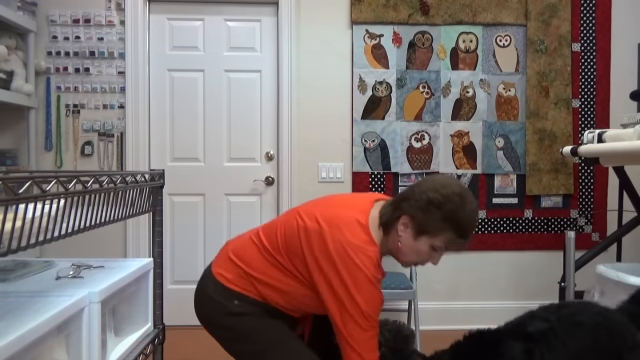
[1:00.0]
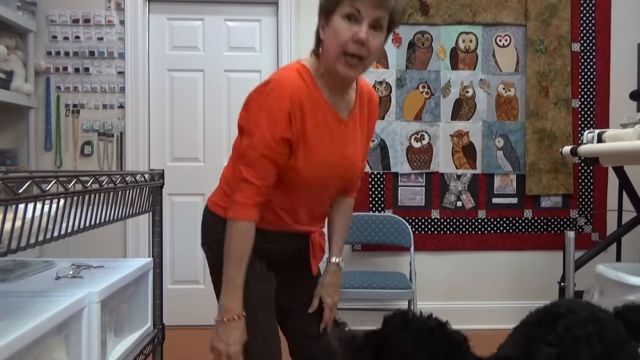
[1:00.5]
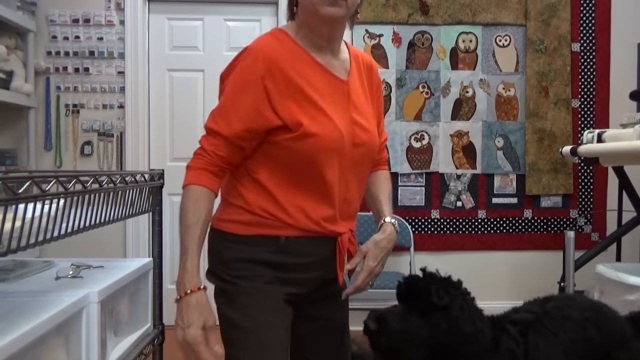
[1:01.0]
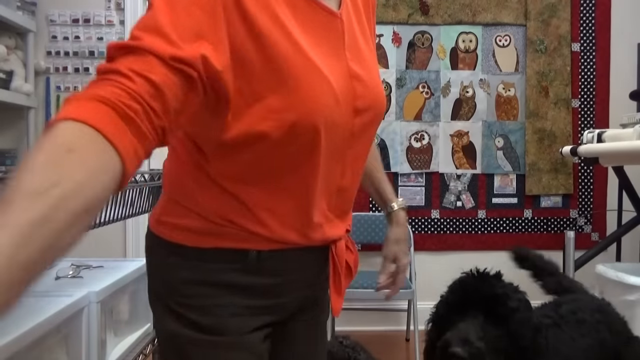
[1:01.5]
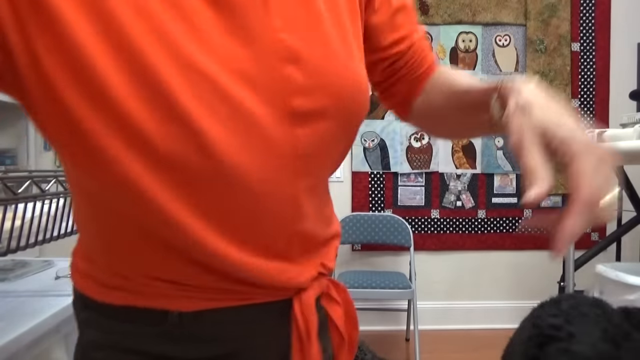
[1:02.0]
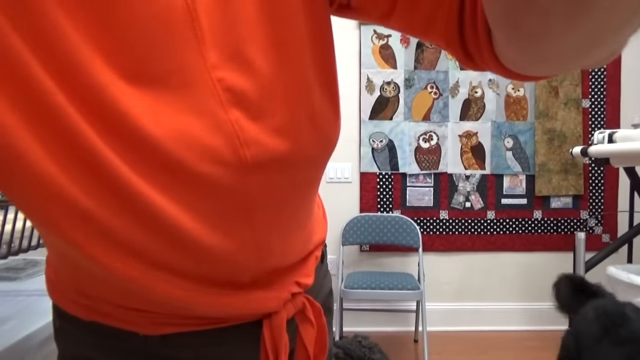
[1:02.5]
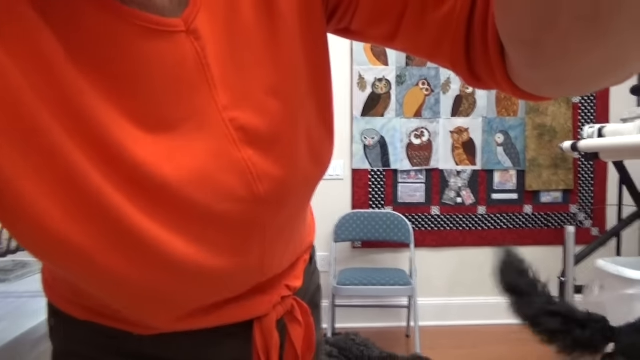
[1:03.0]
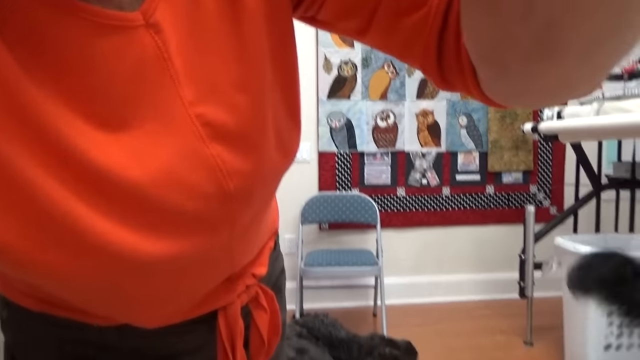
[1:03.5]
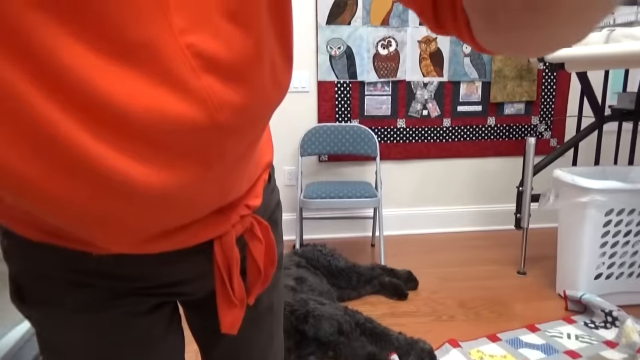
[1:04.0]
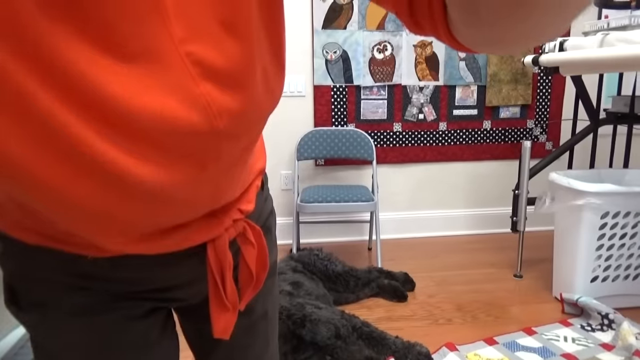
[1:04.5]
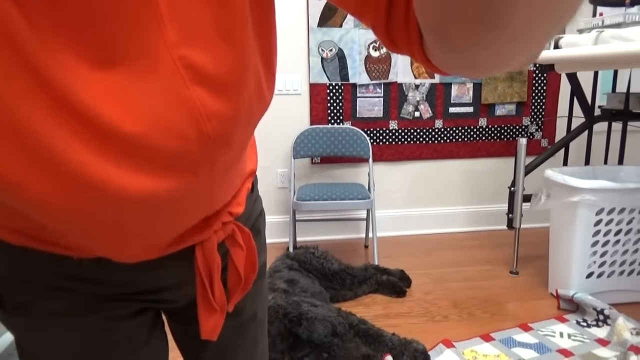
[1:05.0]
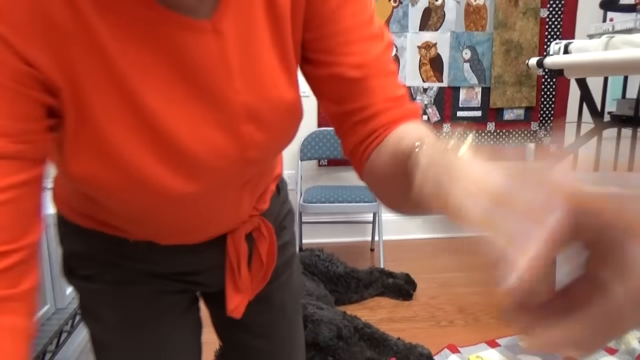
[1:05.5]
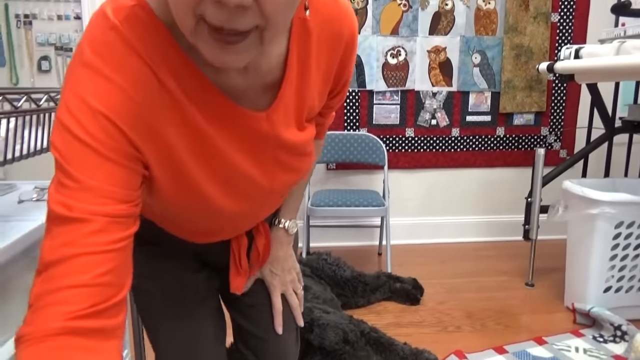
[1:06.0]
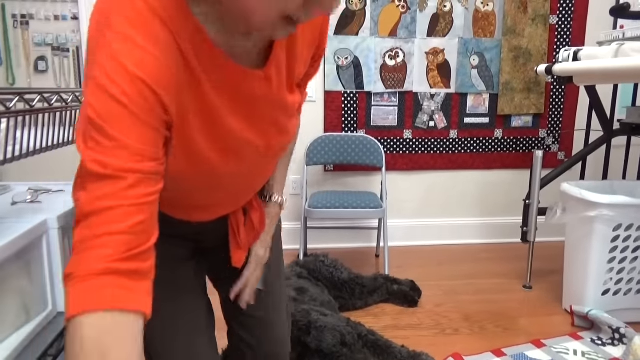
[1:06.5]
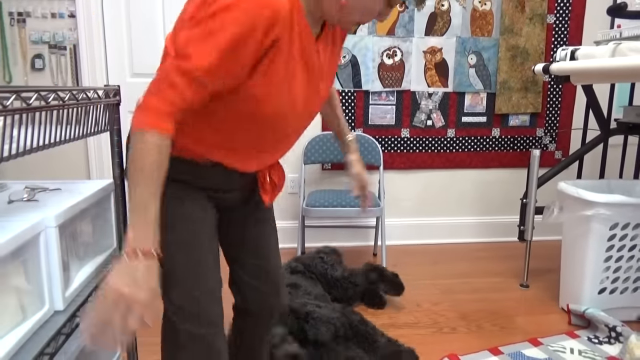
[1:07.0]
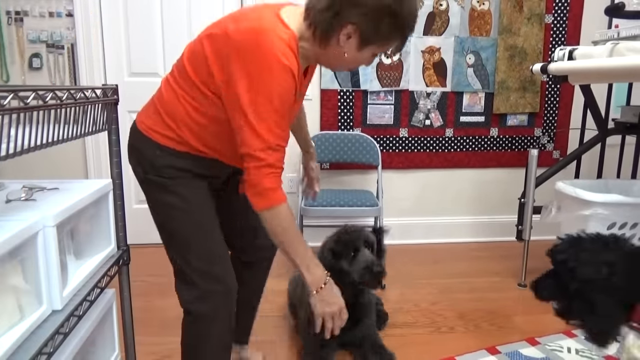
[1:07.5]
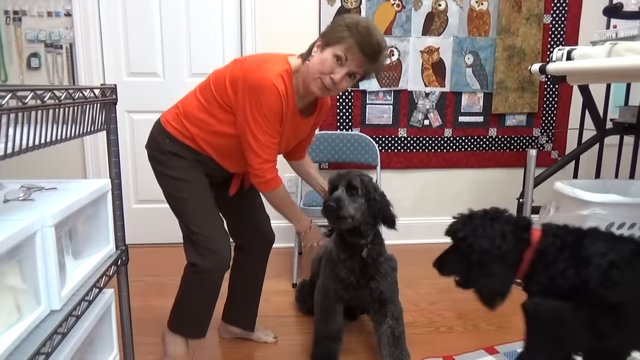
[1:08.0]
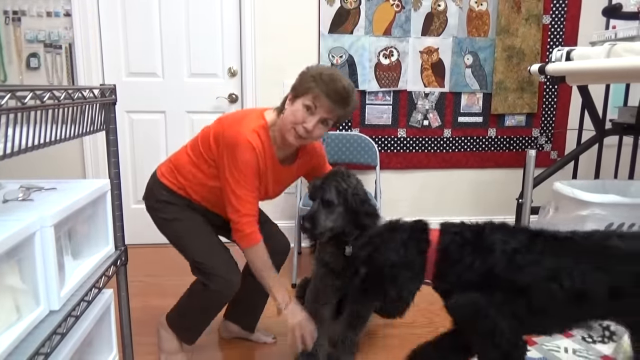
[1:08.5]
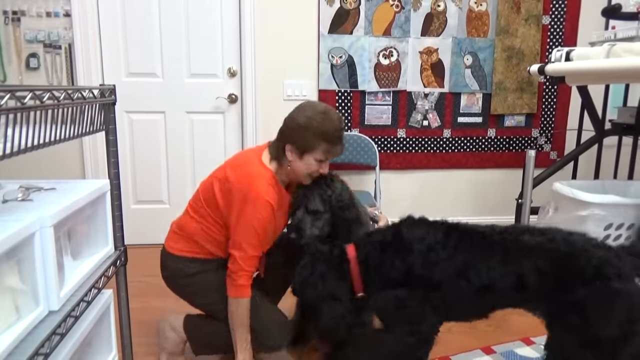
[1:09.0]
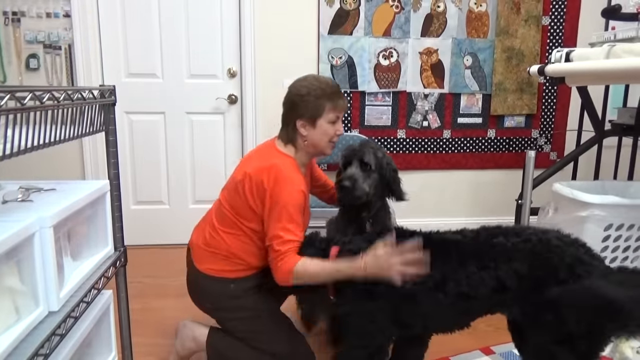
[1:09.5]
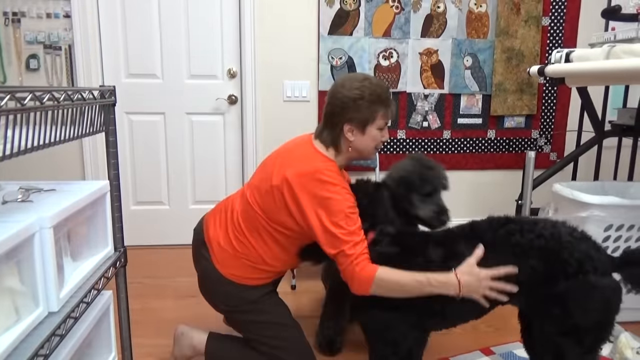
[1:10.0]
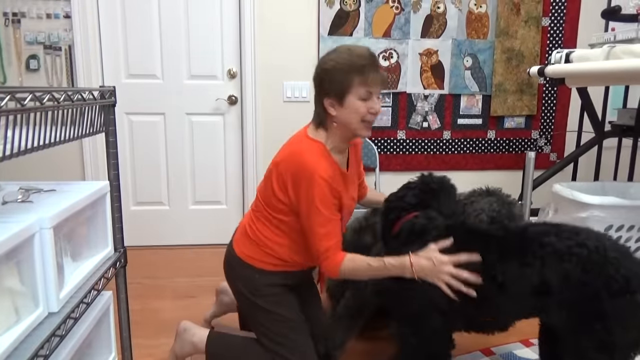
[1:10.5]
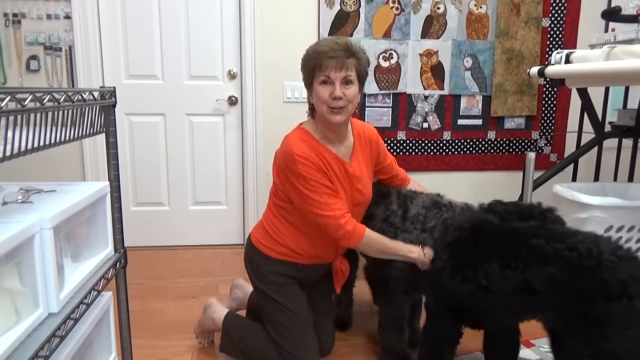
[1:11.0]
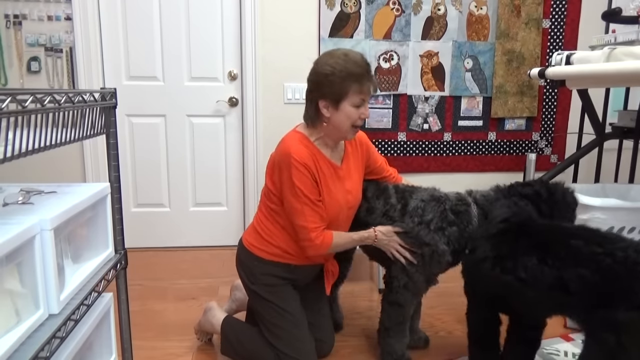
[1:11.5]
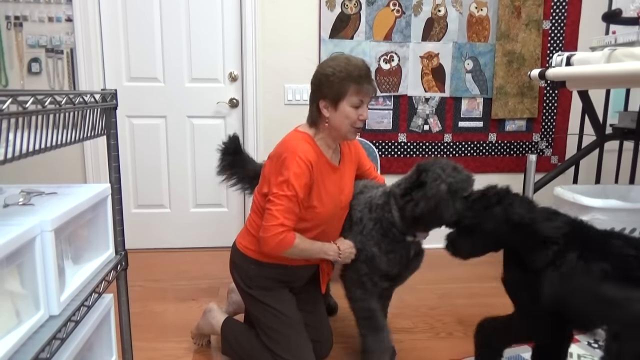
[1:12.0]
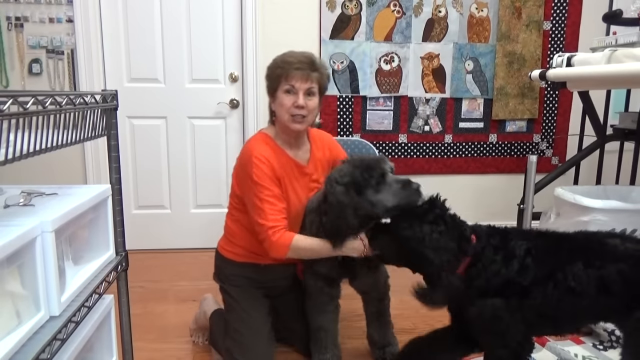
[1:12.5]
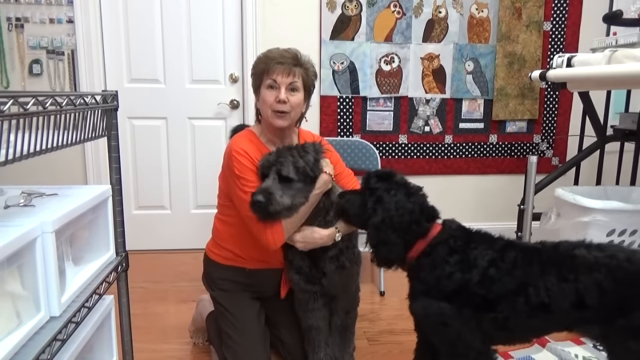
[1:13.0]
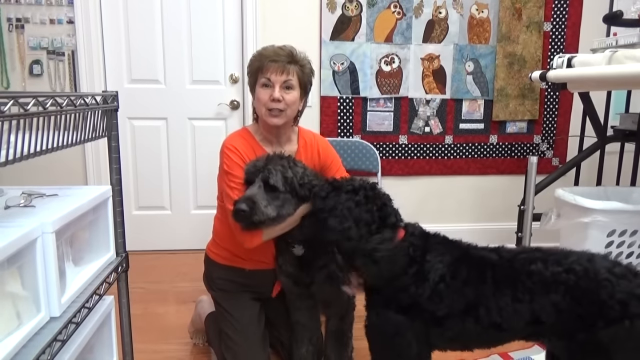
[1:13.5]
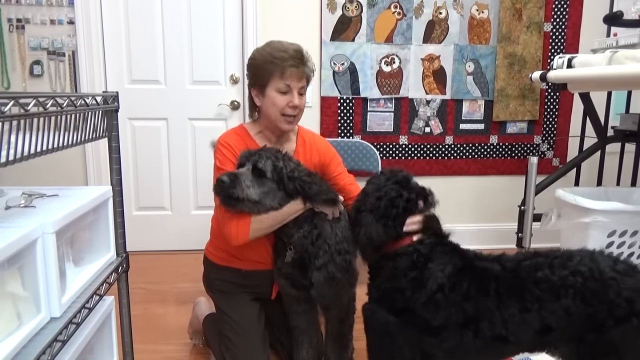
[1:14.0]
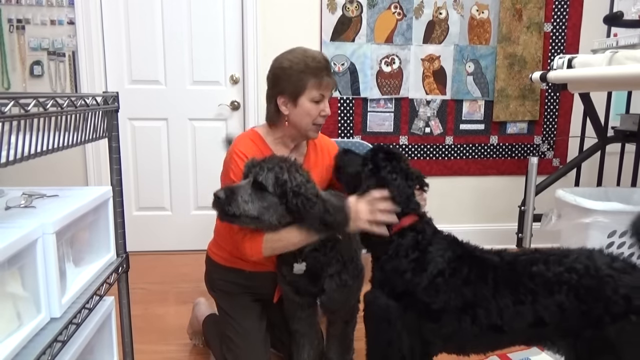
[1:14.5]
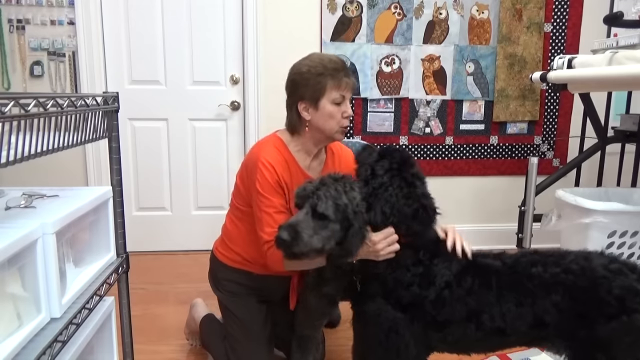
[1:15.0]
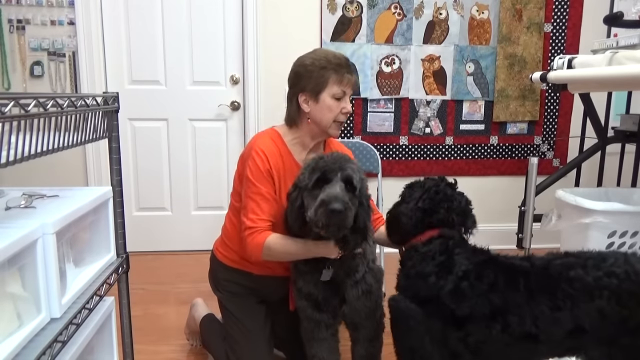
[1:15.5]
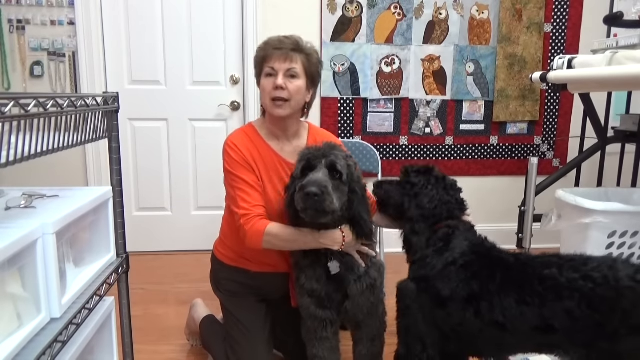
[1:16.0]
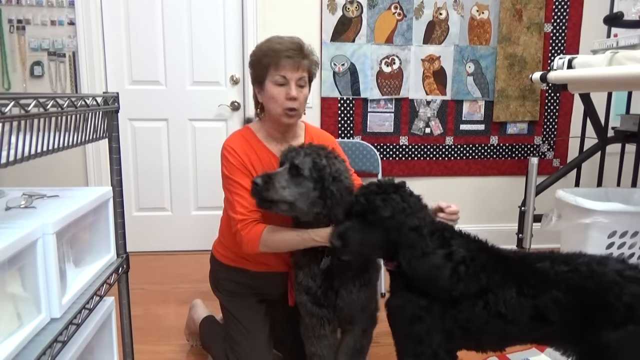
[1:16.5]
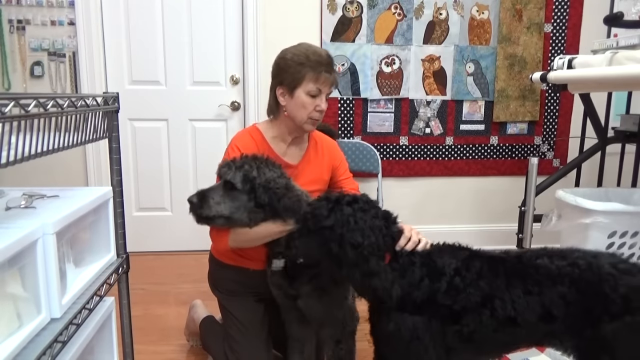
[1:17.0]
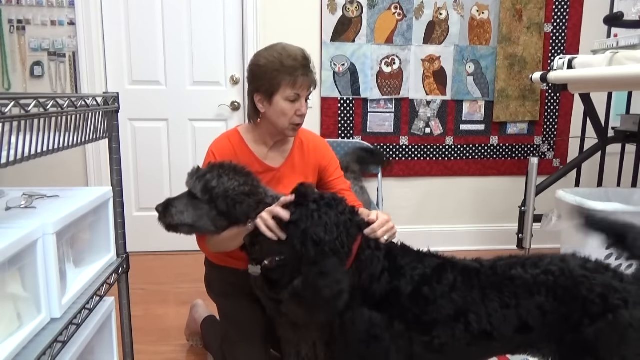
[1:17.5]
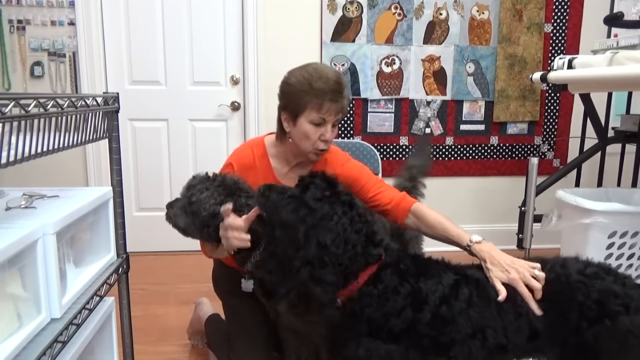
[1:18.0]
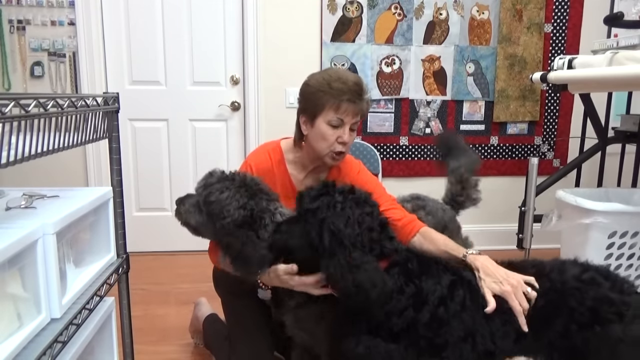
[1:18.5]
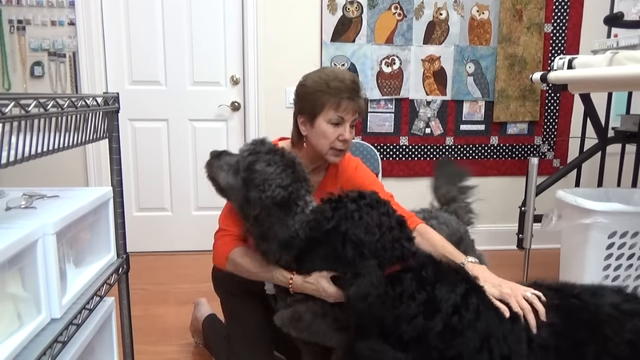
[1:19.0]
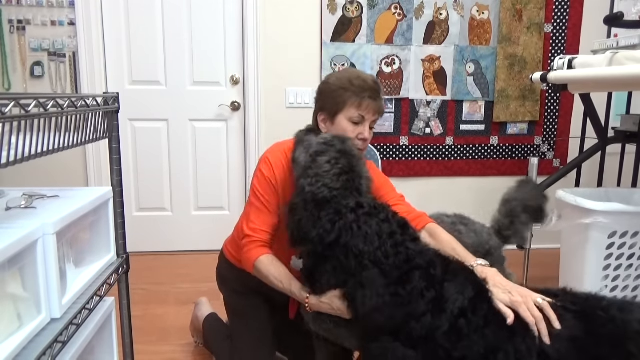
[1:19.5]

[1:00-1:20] Once she is done fixing the camera, the woman goes back down on her knees on the ground and tries to pet and touch both dogs at the same time, but a dog looks like it starts standing up and she can't finish because they are too big. The dogs lick her and look very relaxed and nice. The woman seems very interested in the lighter dog, holding him tight and mostly hugging him. Still on her knees, she keeps petting, rubbing and playing with the dogs, giving them a lot of attention, and they seem very happy.